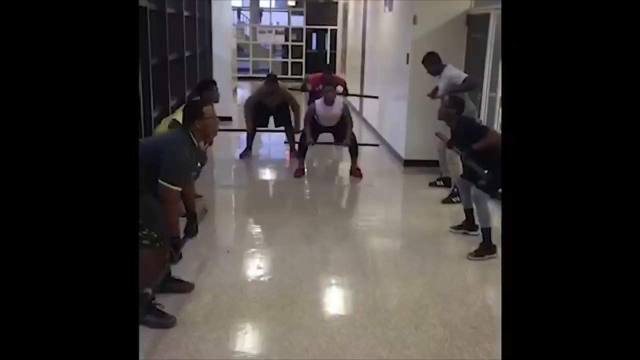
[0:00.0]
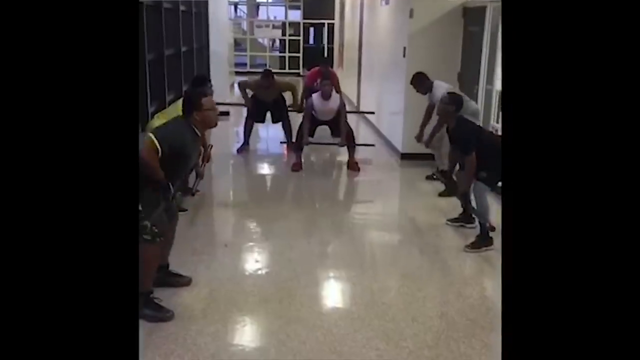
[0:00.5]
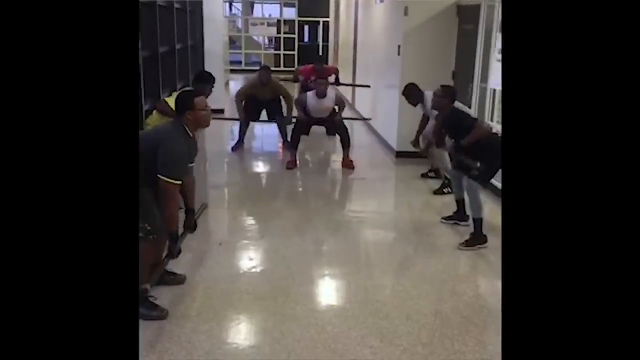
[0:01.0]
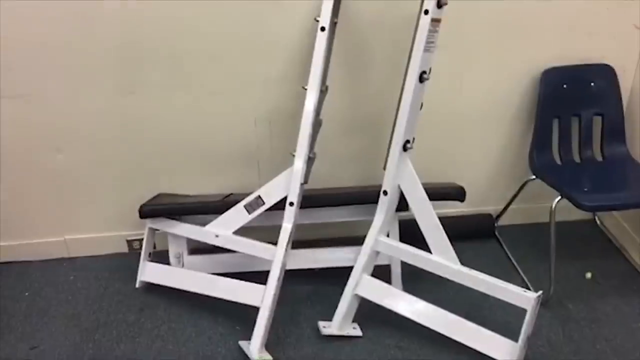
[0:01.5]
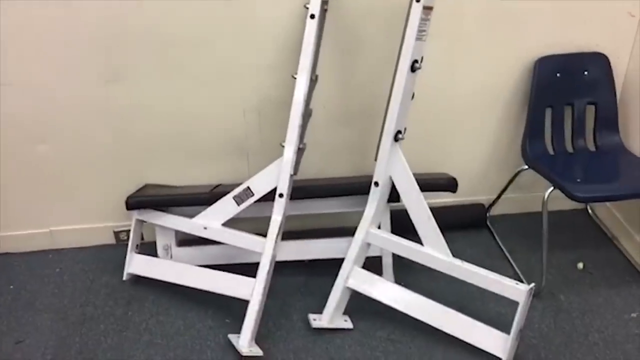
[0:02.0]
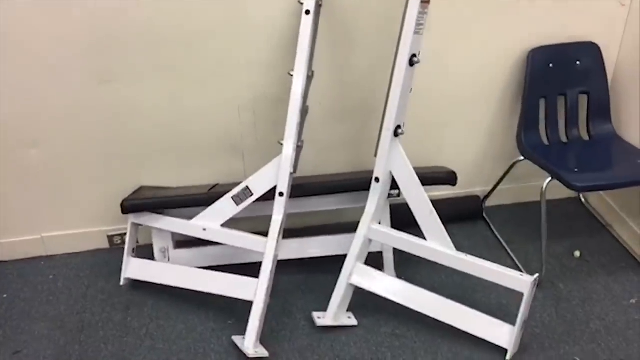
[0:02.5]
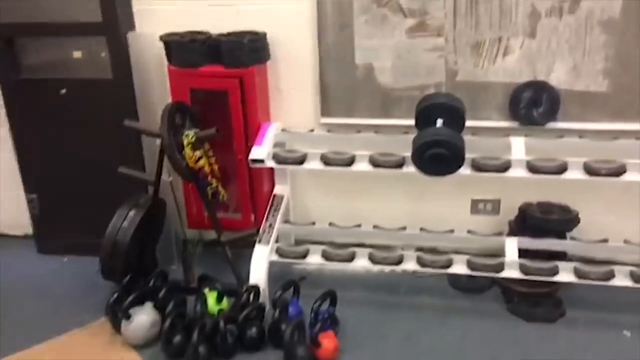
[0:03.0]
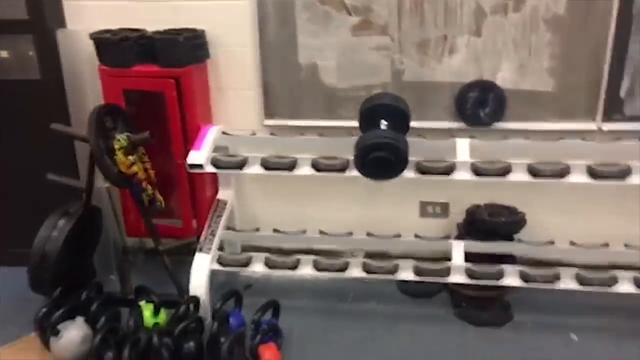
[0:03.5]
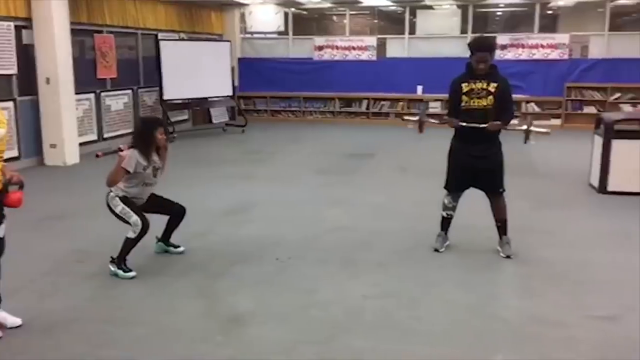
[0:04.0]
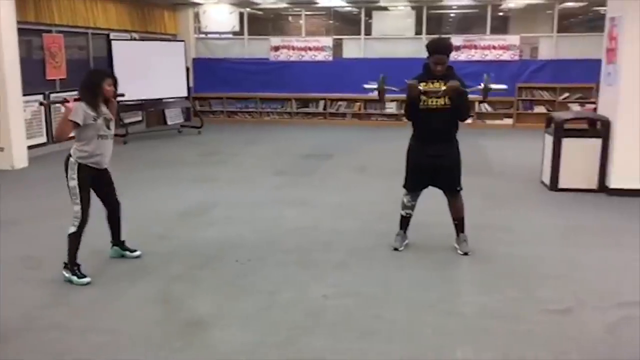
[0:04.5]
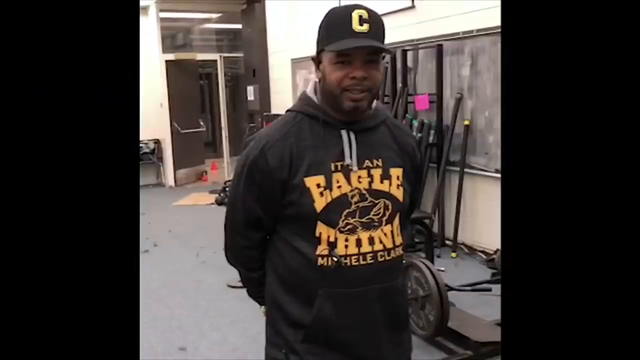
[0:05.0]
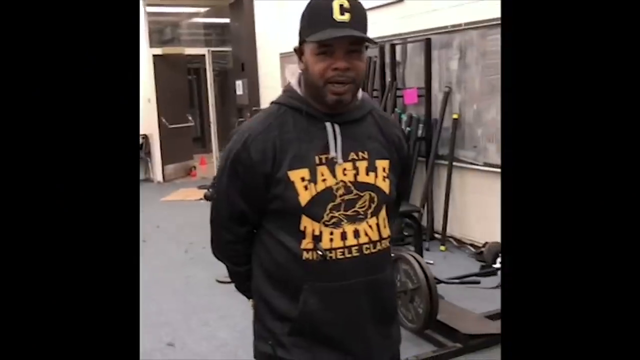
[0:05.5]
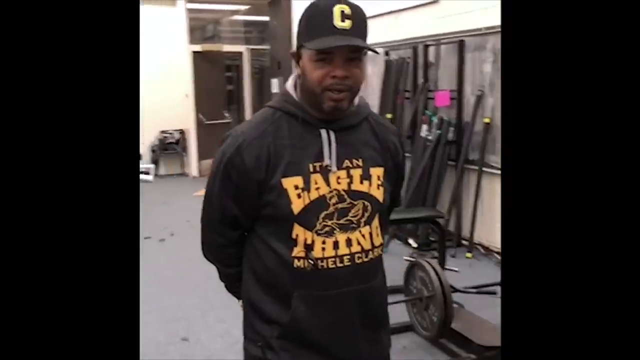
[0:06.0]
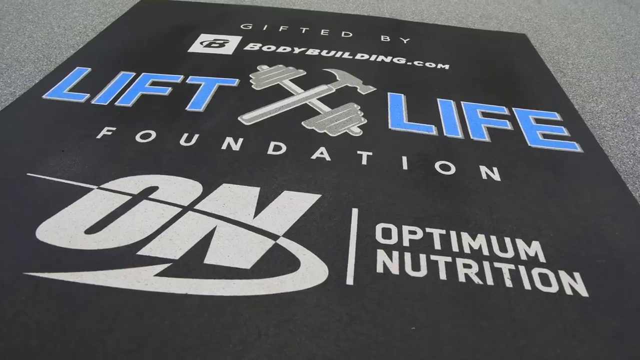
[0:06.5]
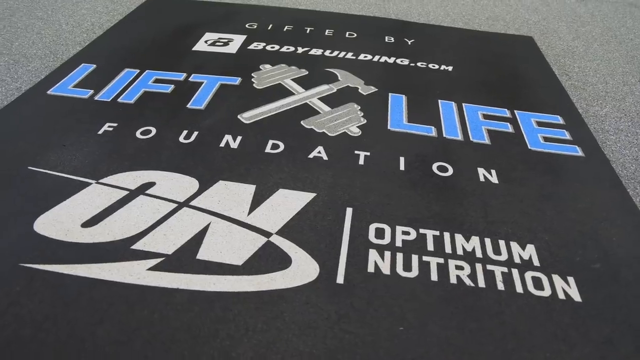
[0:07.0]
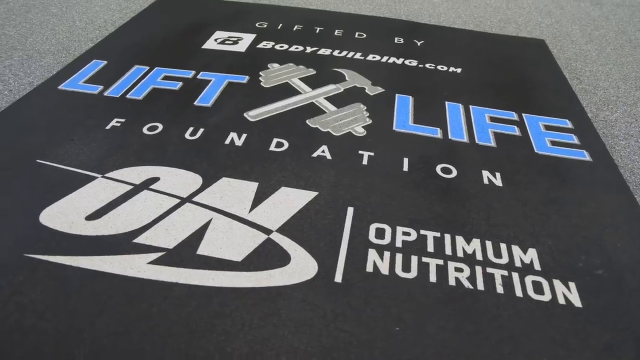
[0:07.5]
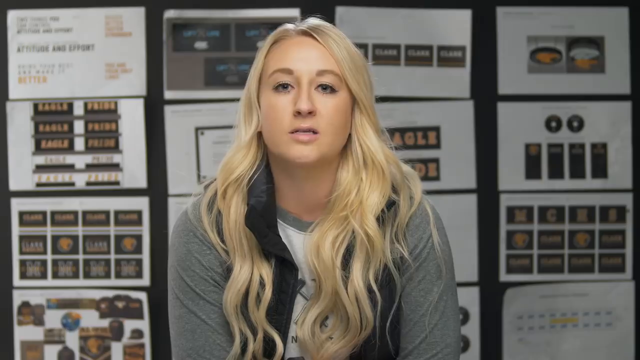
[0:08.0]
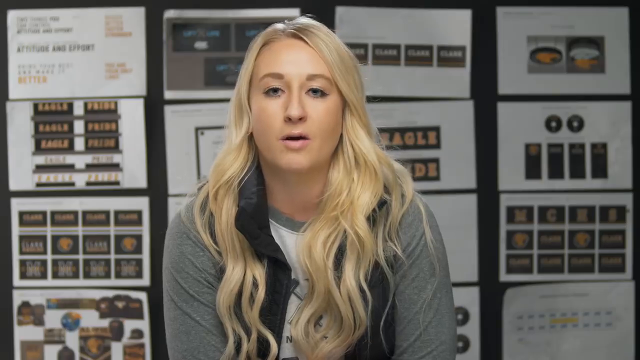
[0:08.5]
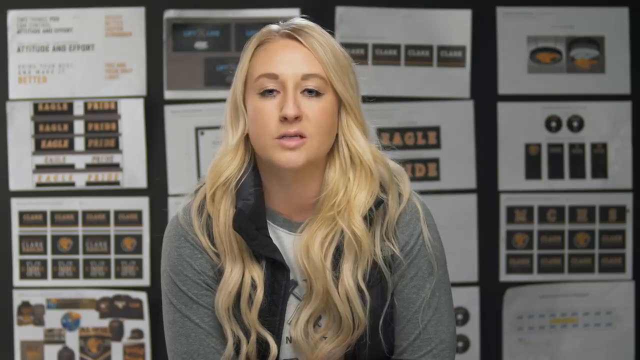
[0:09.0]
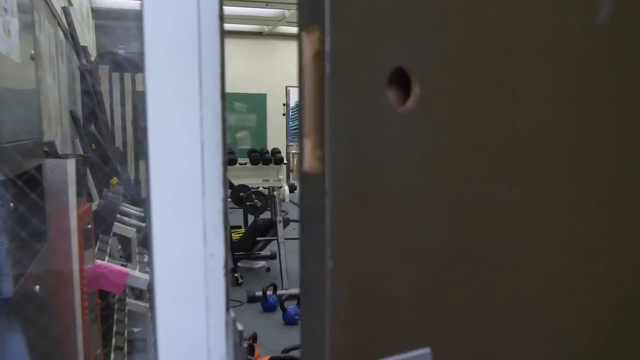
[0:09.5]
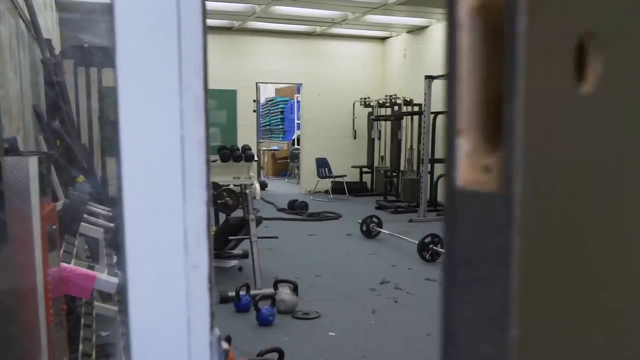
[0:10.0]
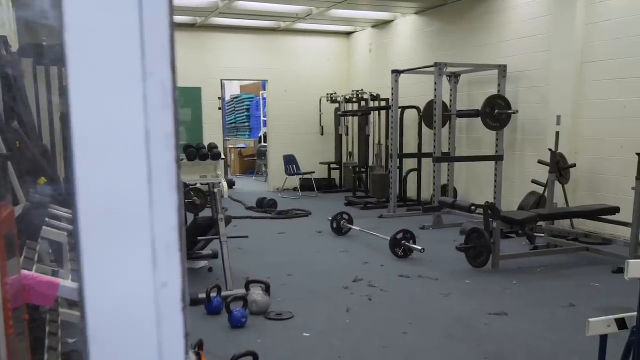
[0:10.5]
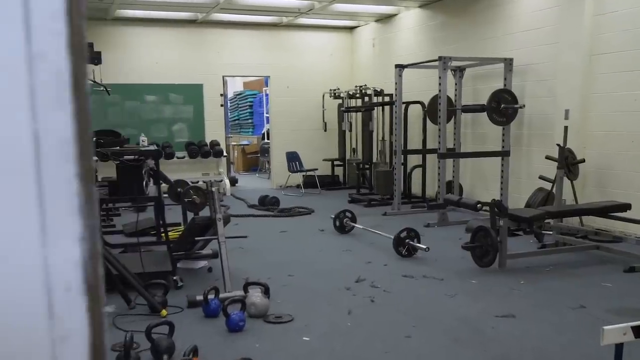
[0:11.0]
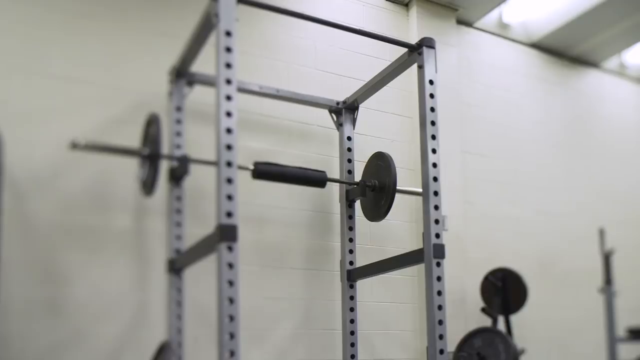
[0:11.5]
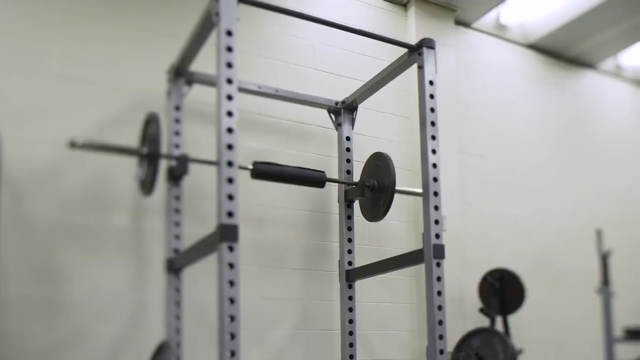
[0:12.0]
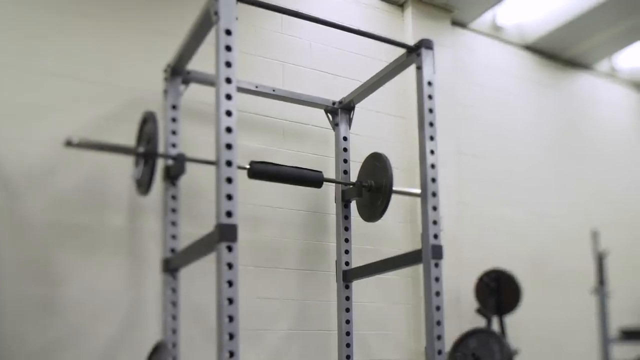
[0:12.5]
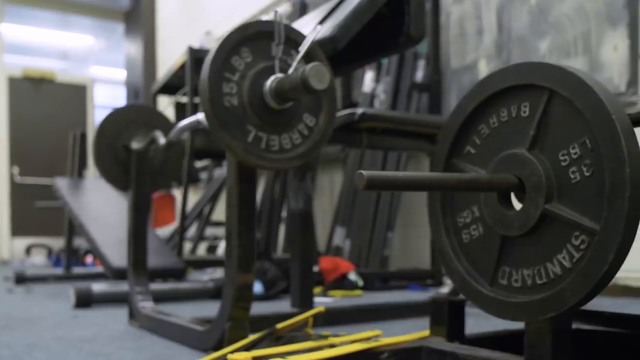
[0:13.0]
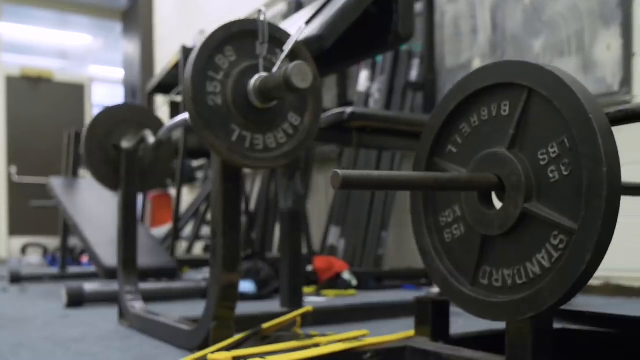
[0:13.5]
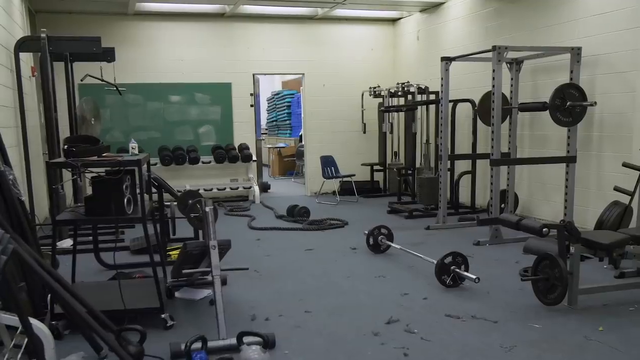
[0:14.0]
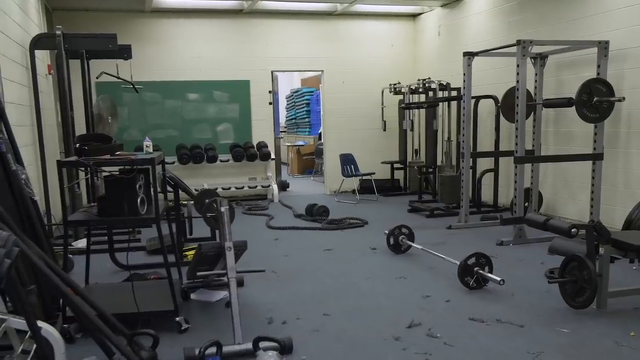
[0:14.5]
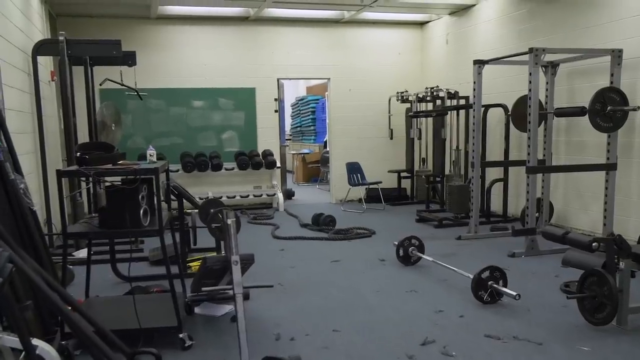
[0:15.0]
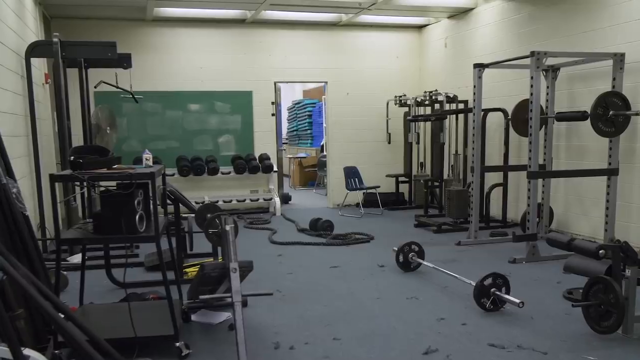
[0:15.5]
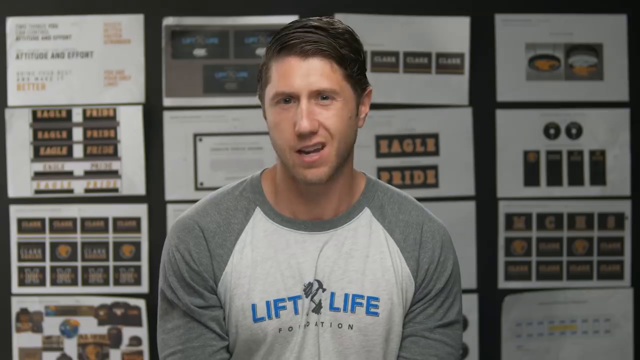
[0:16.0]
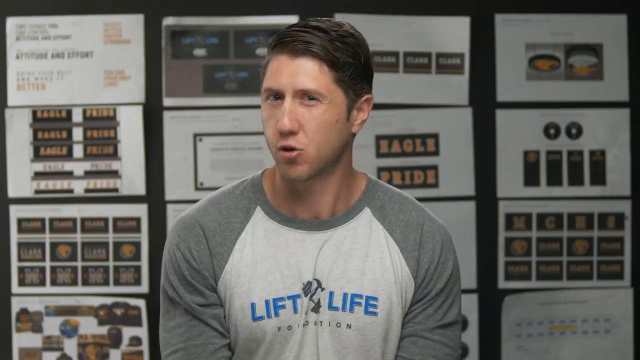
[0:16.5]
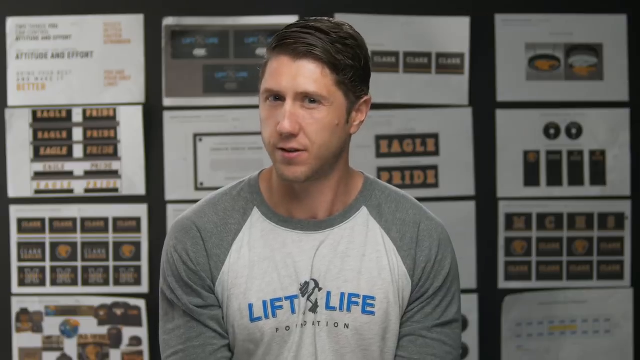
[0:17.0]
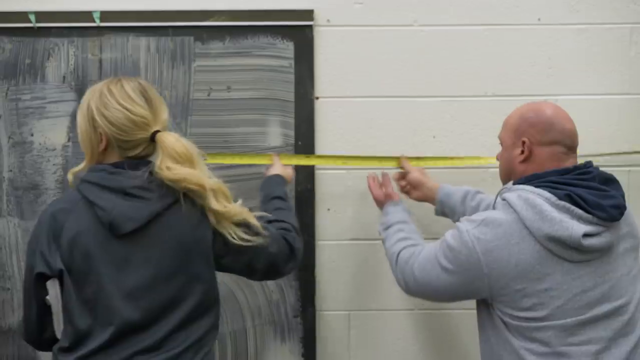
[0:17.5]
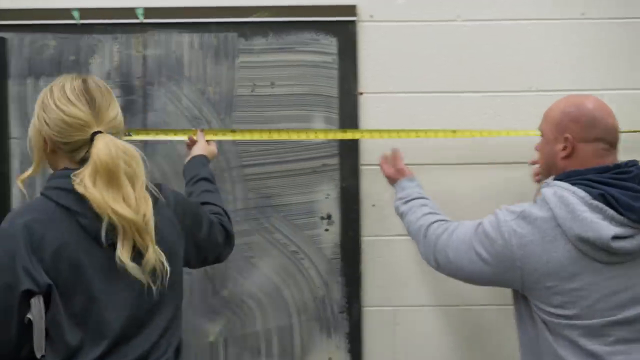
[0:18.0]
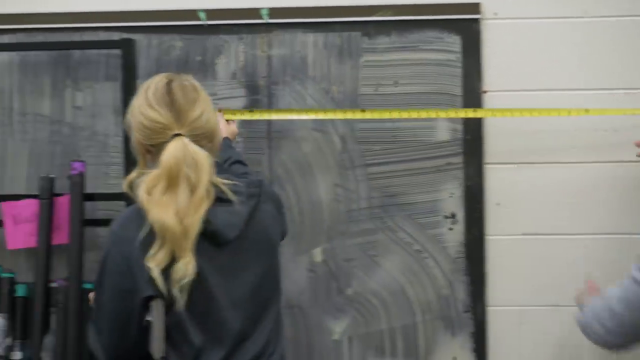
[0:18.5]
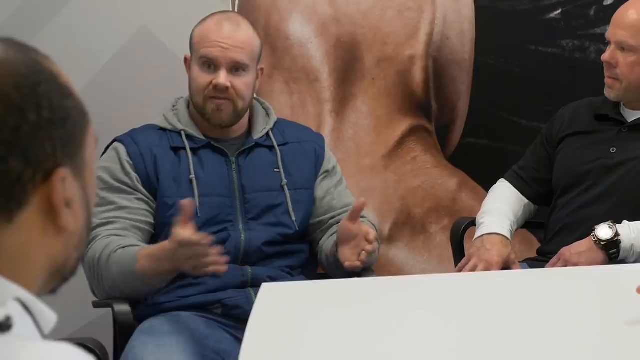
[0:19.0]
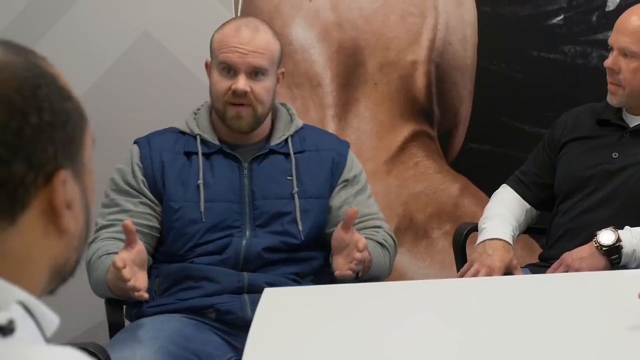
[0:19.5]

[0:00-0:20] Several men are in what looks like a hallway, all hunched over and bent at the waist, each holding what looks to be a heavy bar with both hands and pulling it up toward their chest. Some weightlifting equipment that appears not to be assembled is on the floor against the wall, with a plastic chair next to it. A rack that holds dumbbells appears, and the view seems to be inside a gym, where two people are standing in the room, both holding weight bars in their hands; one of them is curling. A man in a hoodie and a hat speaks to the camera. A woman with long blonde hair and a gray shirt sits in front of the camera, talking to it. The door to a gym opens, and inside is all the gym equipment, including a lot of weights; nobody is in the gym. Different photographs of different weights follow, for example a weight bar on the ground. A man wearing a shirt that says "Lift Life" looks directly into the camera and speaks; the chest area of the shirt is white and the arms are gray, and it looks like a raglan. A sticker on the back says "Eagle Pride". Two people in a hallway measure the wall with a tape.